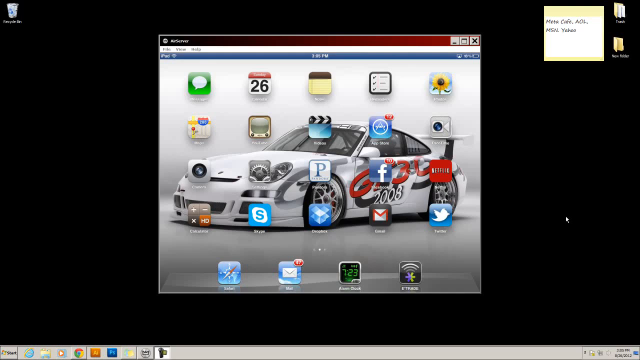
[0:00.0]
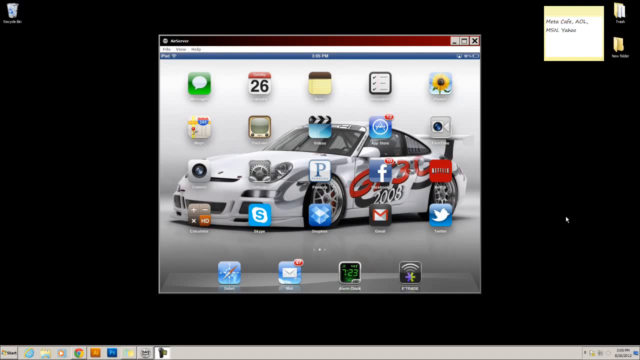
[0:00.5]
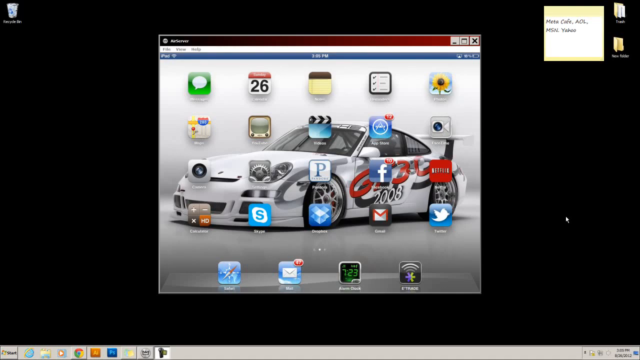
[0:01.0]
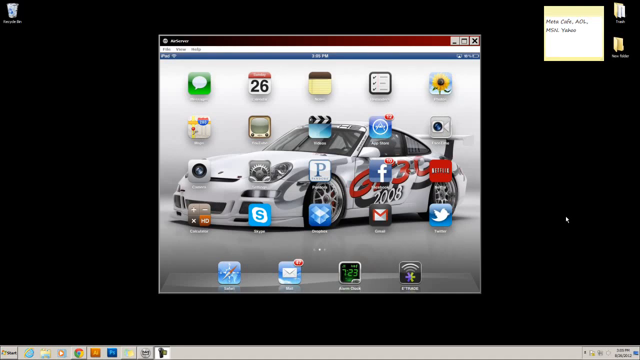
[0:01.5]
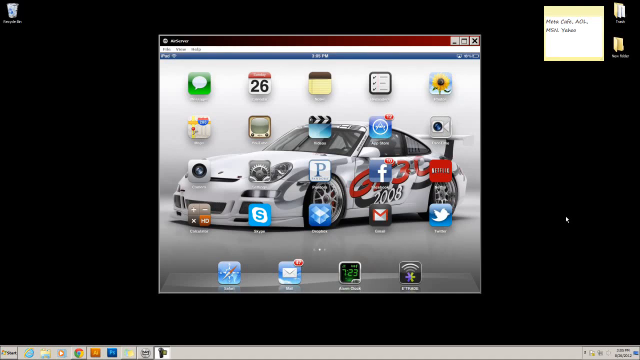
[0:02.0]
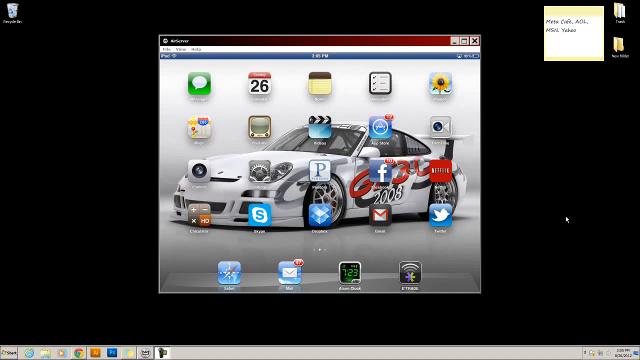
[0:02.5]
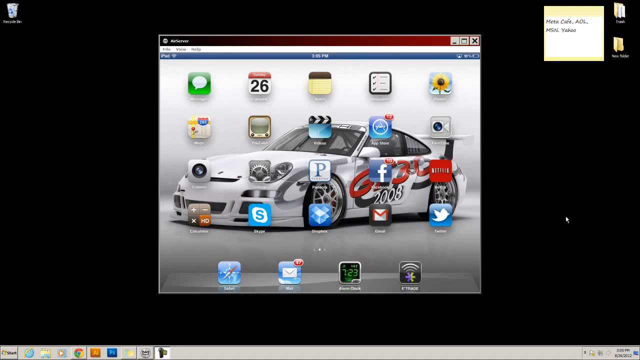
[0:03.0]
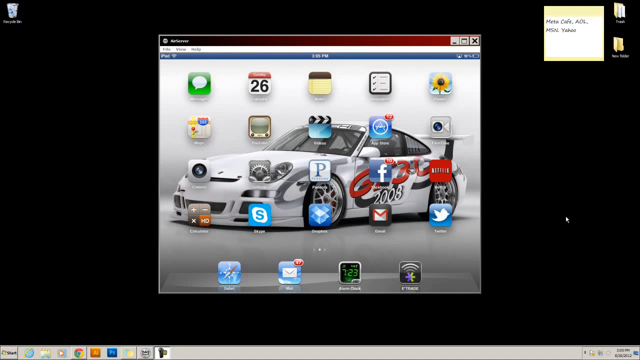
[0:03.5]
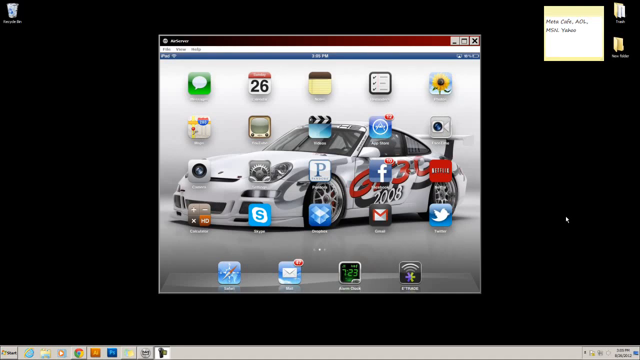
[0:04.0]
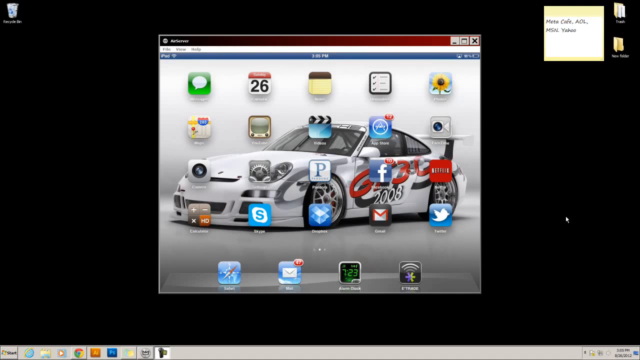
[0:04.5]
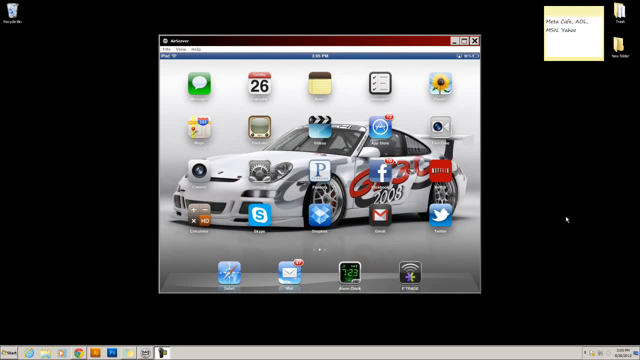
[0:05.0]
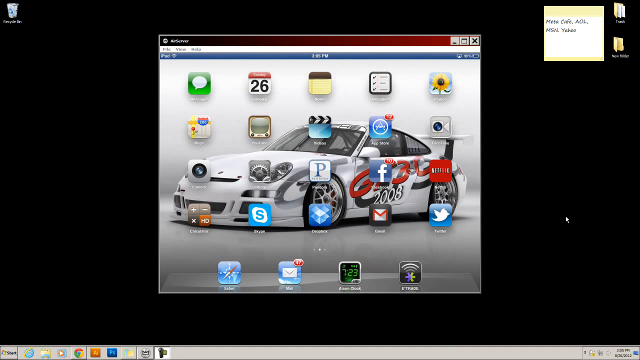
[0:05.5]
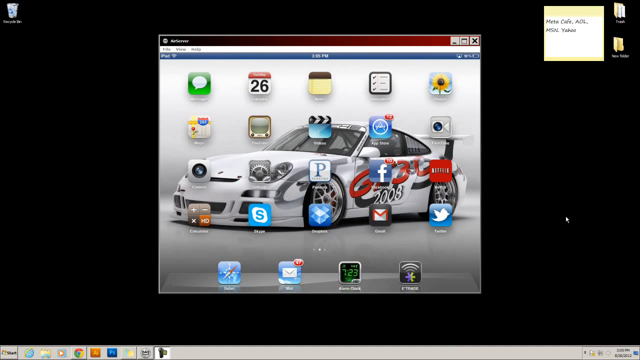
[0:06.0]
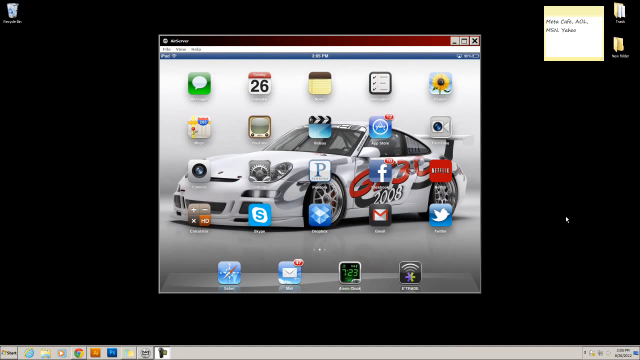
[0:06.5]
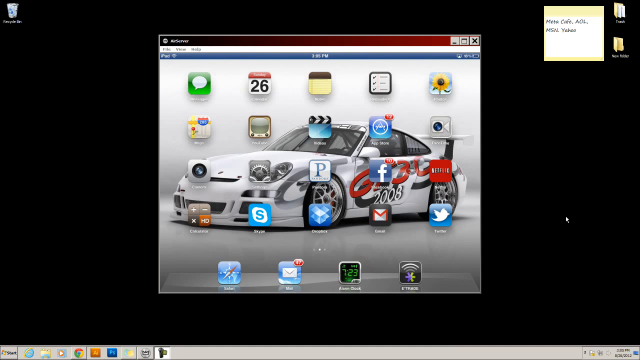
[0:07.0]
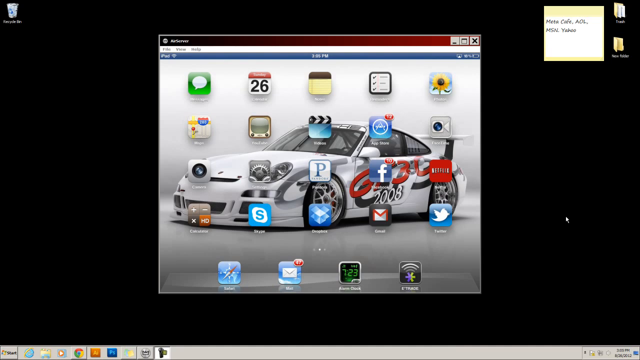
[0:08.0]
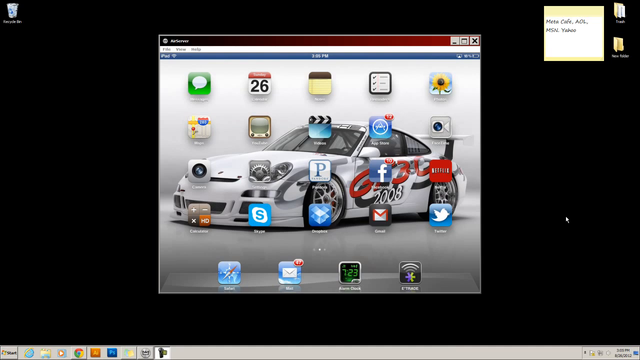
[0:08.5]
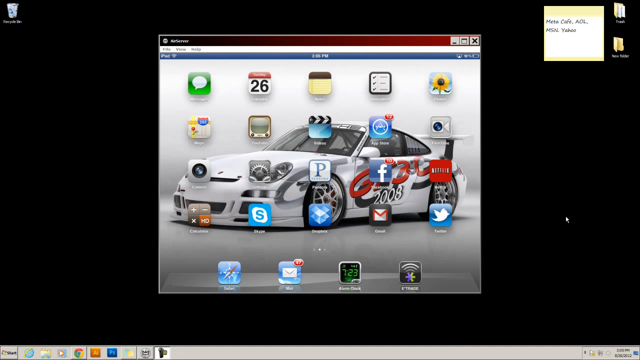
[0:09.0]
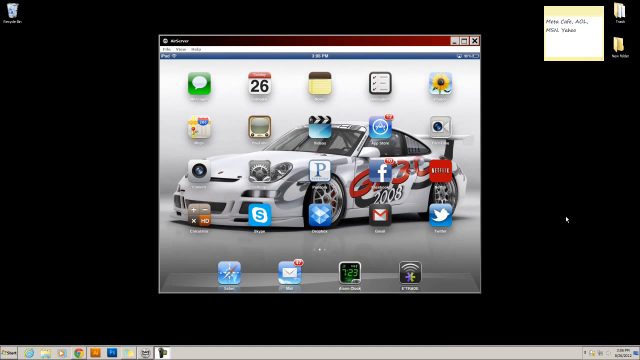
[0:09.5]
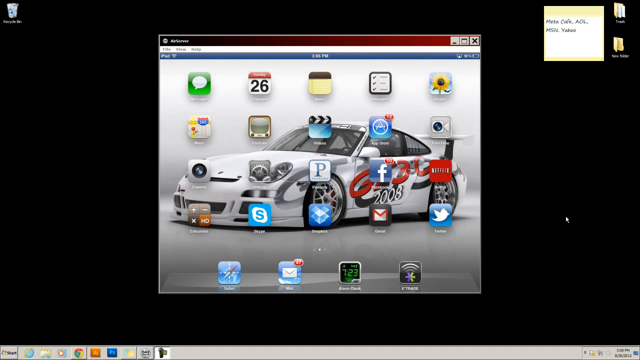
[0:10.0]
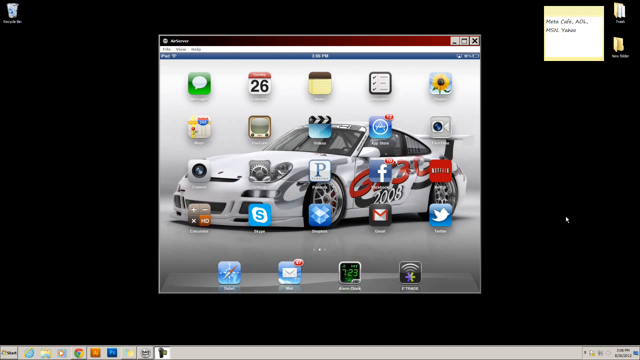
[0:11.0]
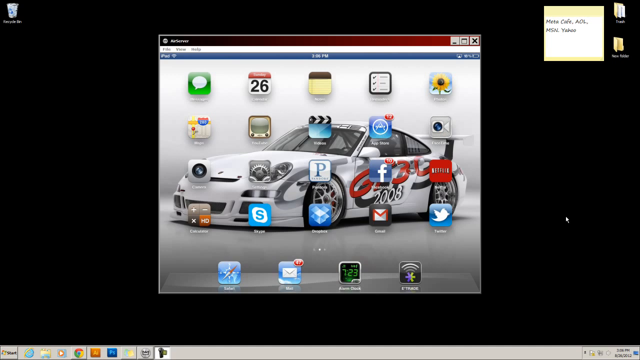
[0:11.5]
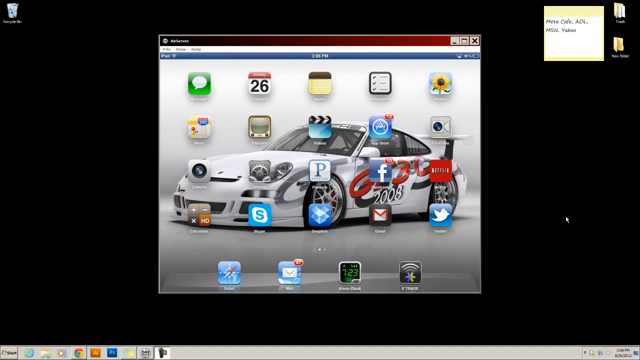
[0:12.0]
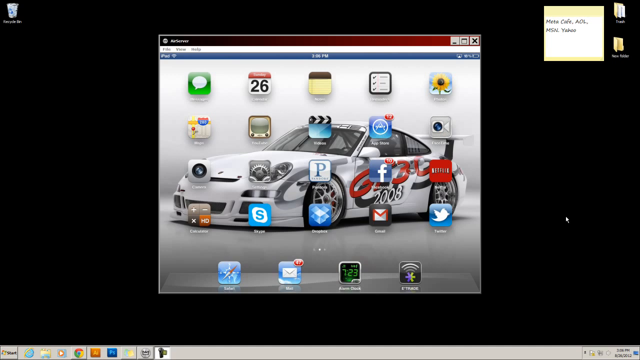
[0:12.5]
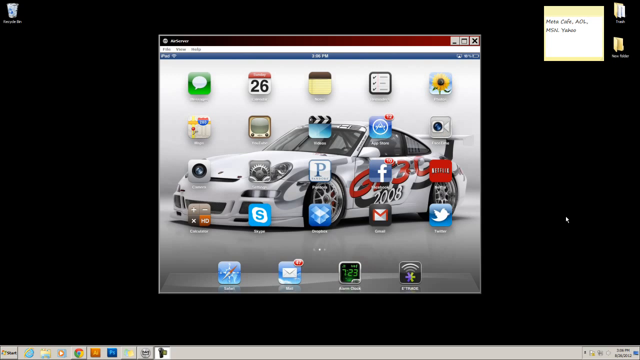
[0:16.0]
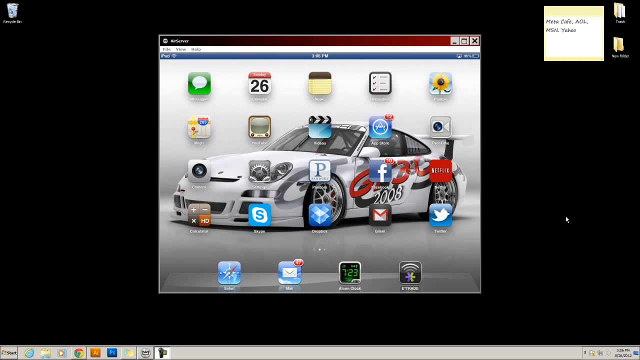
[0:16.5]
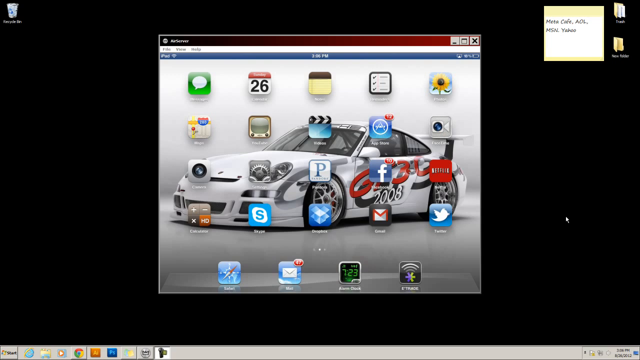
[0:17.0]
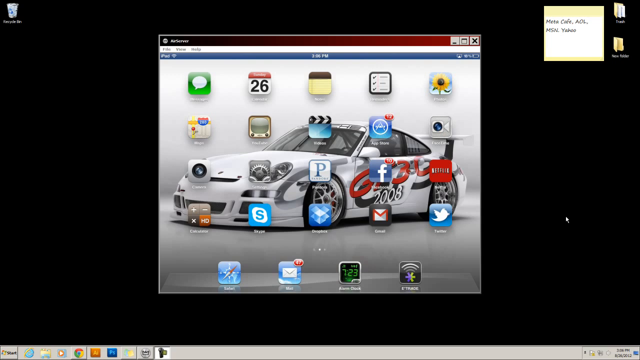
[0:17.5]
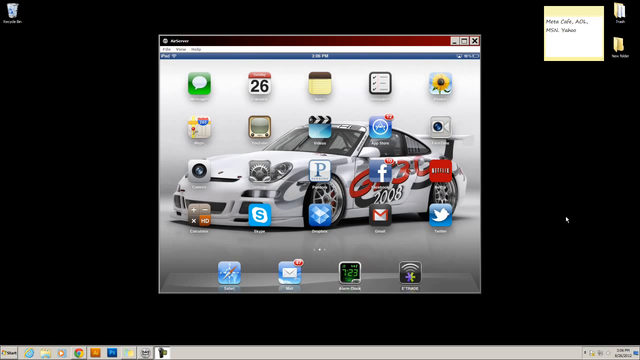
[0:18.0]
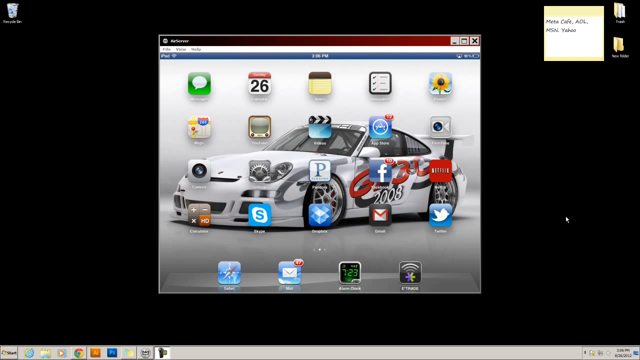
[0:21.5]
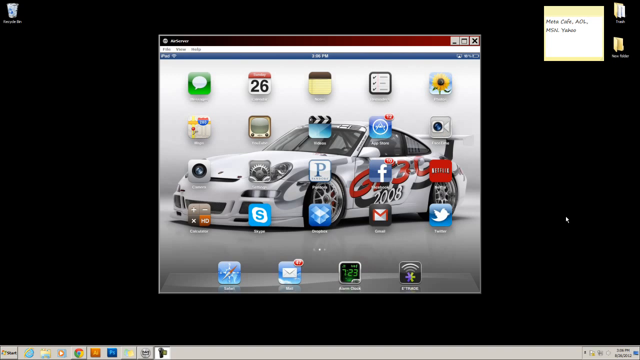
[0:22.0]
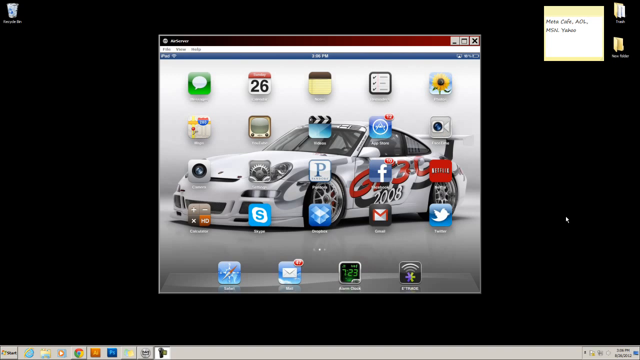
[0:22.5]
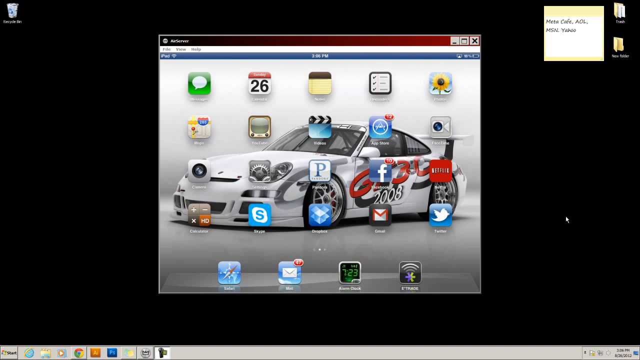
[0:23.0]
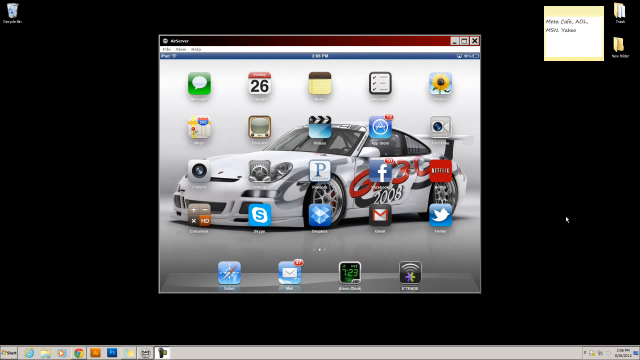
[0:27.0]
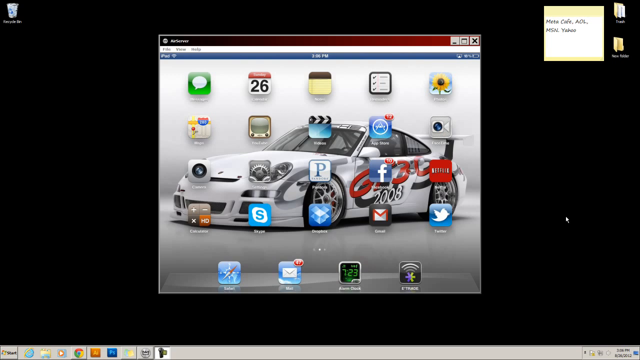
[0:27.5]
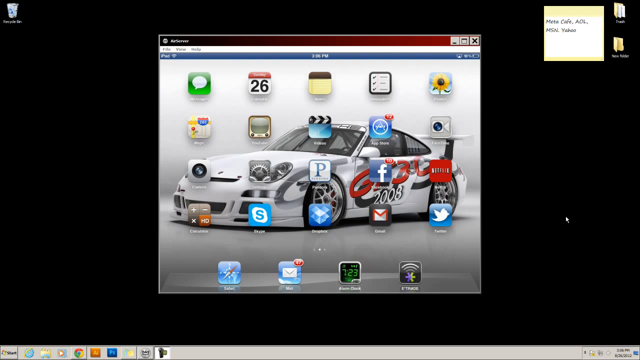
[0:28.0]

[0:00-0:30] A desktop with a black background shows a silver box in the middle containing a picture of a car and various app logos; it looks like someone's iPad is being streamed to the computer. White text at the top left of the box reads "iPad". Apps such as Skype, Messages, Photos and Twitter are visible, along with a Gmail logo in the middle of the screen, a calendar, a notes app, Google Maps, camera, calculator, email, Safari and Netflix. The taskbar briefly pops up at the bottom of the screen, then pops up a second time, showing Google Chrome, Media Player and Internet Explorer. A post-it note in the top right-hand corner reads "Yahoo AOL MSN". The image is otherwise stationary.